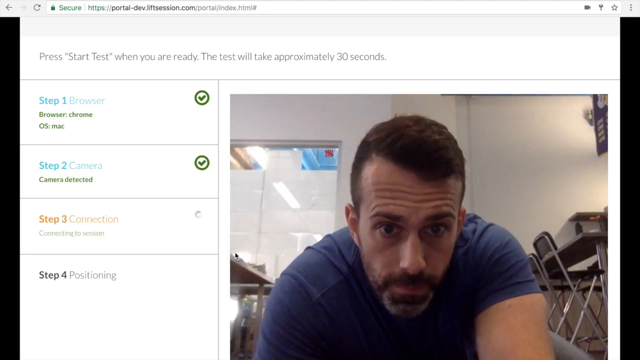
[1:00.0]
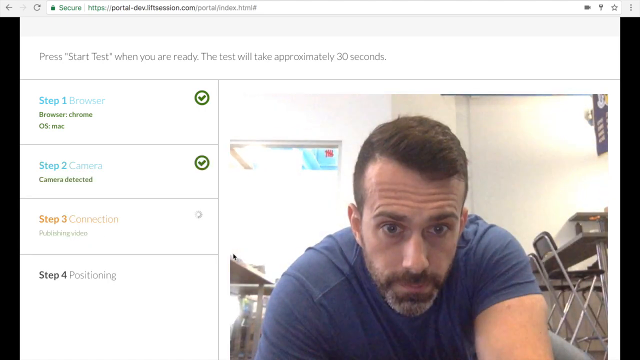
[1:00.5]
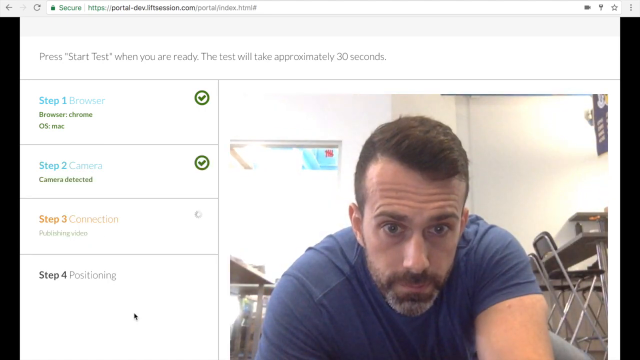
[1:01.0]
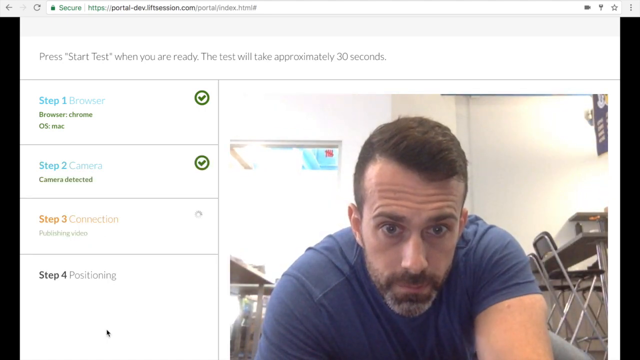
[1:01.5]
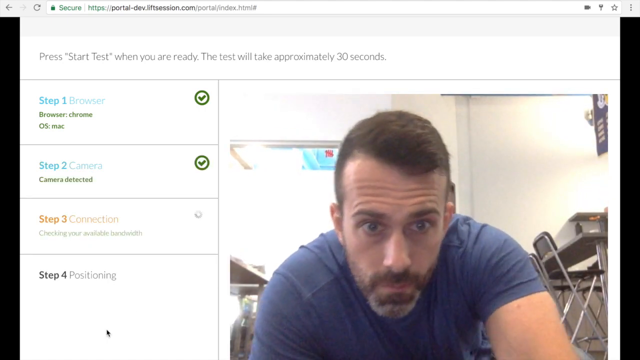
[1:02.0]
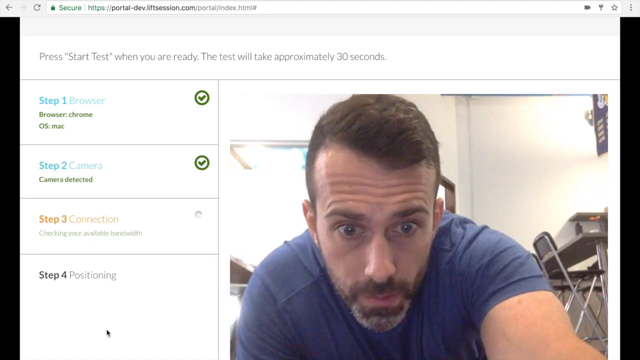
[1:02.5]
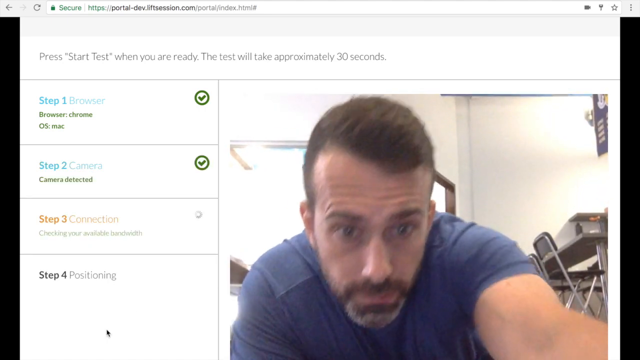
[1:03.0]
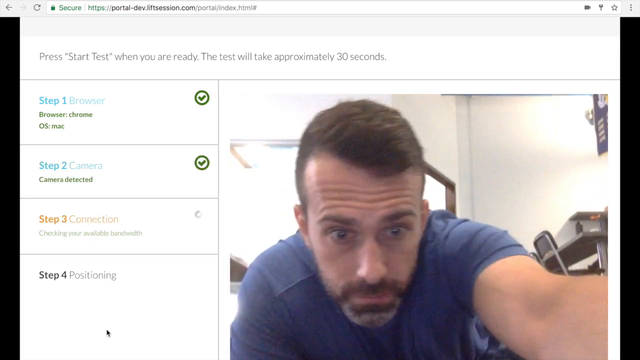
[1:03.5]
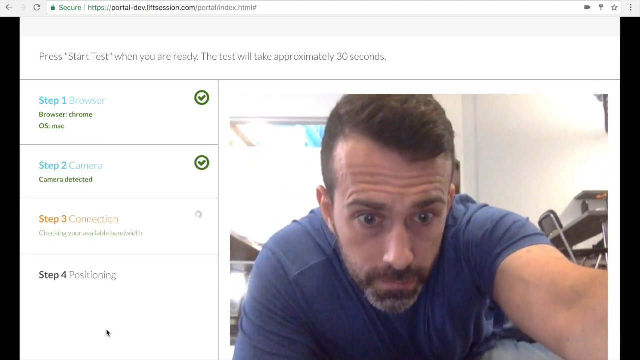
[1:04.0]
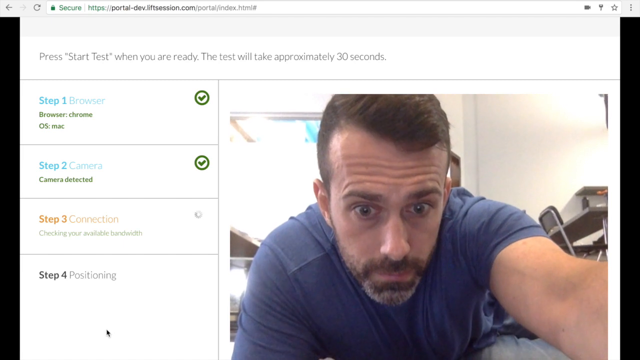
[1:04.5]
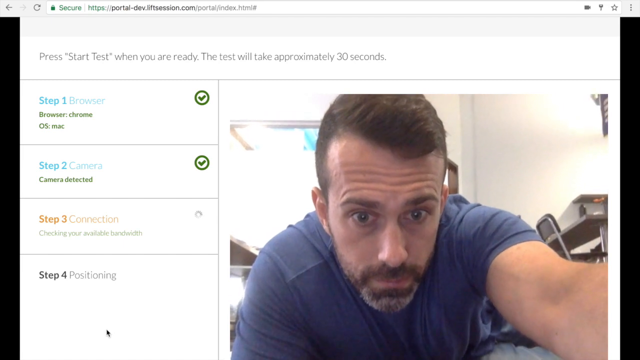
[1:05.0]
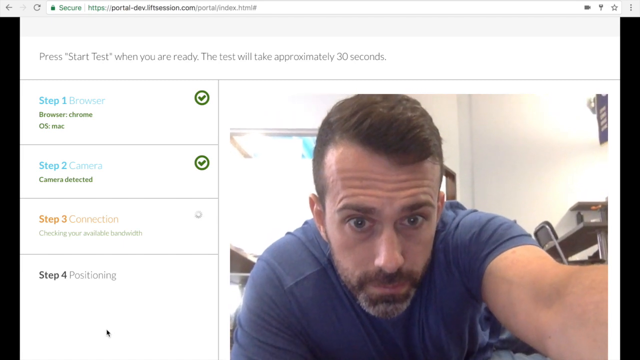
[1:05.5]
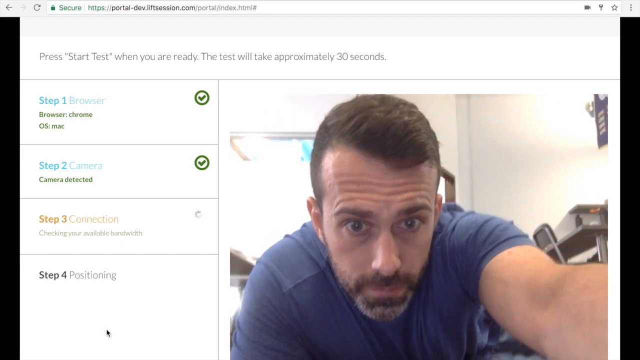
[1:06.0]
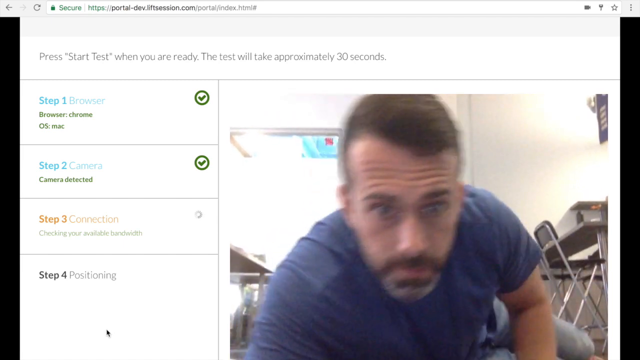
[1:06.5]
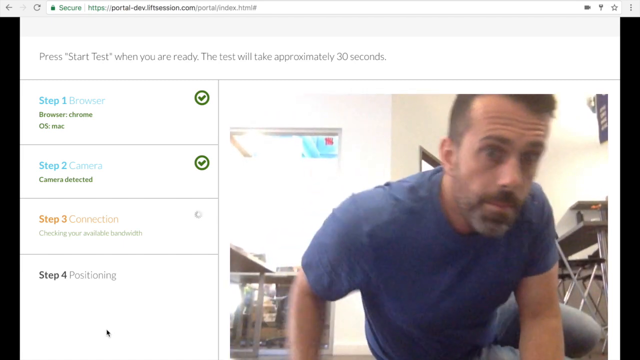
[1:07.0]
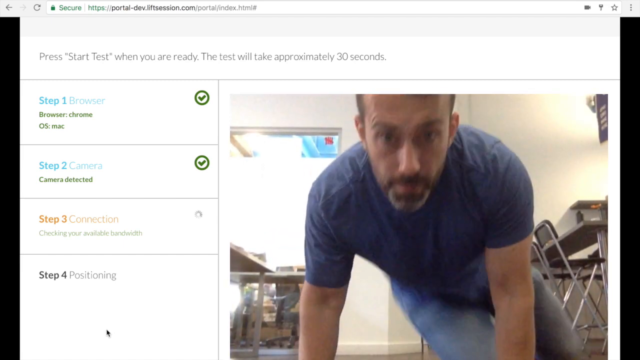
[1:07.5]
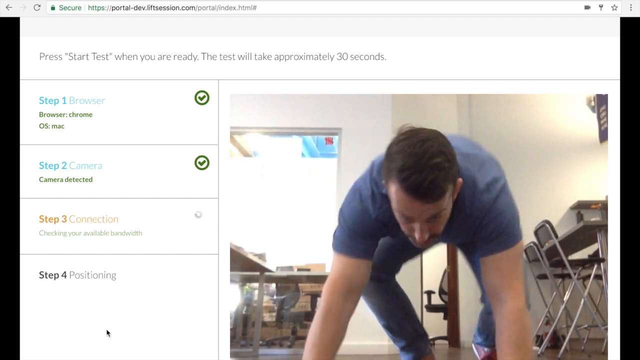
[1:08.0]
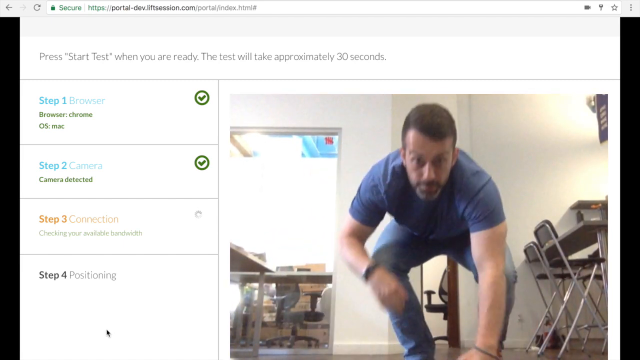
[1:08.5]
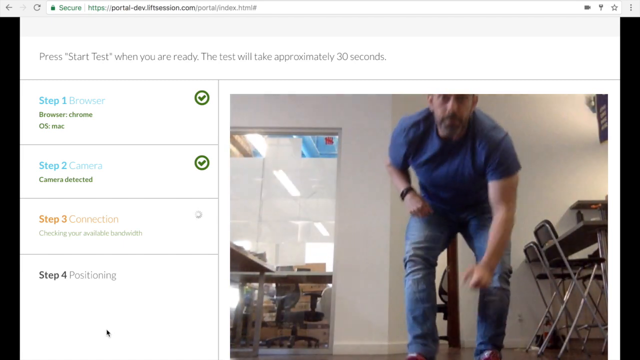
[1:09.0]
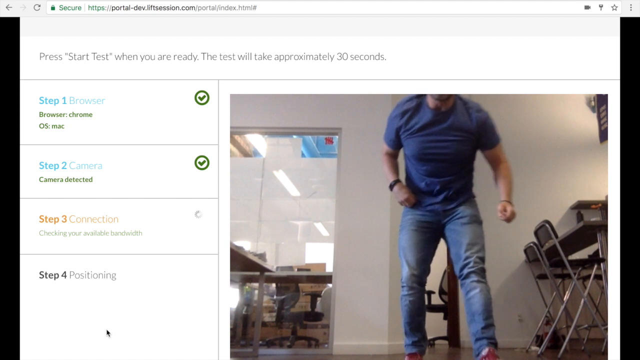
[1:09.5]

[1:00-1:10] A webpage with a white background shows gray text at the top: "press start test when you are ready. The test will take approximately 30 seconds." Beneath it, four steps are arranged vertically on the left. Step 1 has a green checkmark and is labelled "Browser: Chrome." Step 2 has a green checkmark and black text at the bottom reading "camera detected." The text for Step 3 is orange, with "Connection" to its right and "Connecting to session" beneath. Step 4, labelled "Positioning," is still in black text. On the right side is a stream or photo of a man with brown hair and a beard, wearing a blue shirt and looking intently toward the camera, in a room with white walls. The man fidgets in place as the cursor moves to the lower left of the page. He leans forward and reaches out with his left arm to adjust something ahead of him, like the camera, tilts the camera so it faces up more, and moves back. He then stands up and takes a few steps back, revealing blue jeans and a black watch or band on his right wrist.